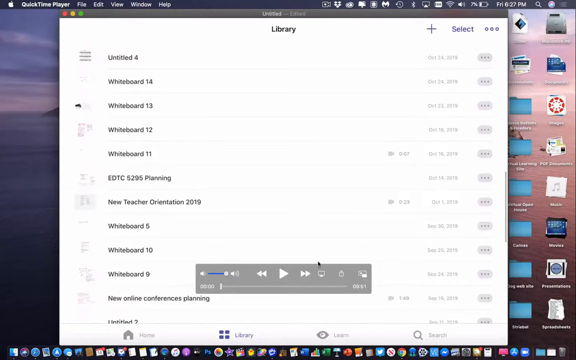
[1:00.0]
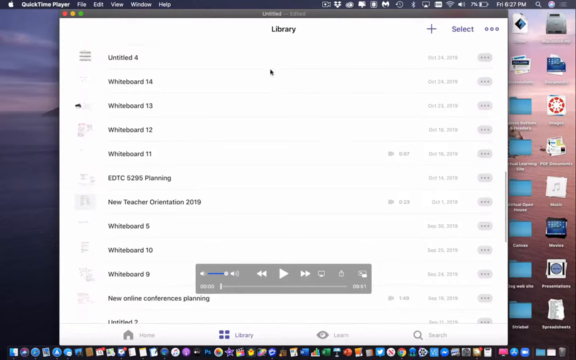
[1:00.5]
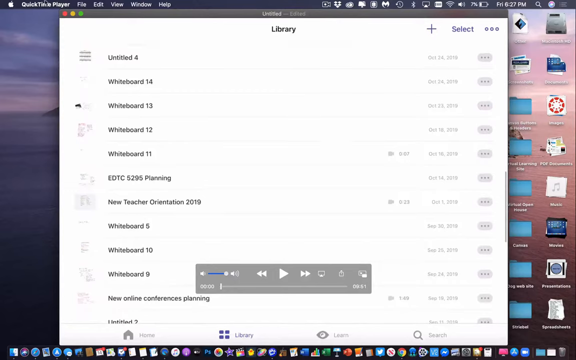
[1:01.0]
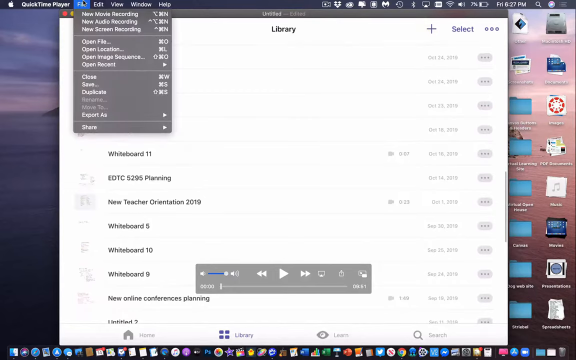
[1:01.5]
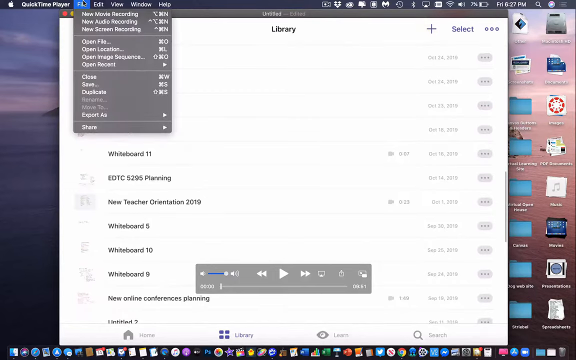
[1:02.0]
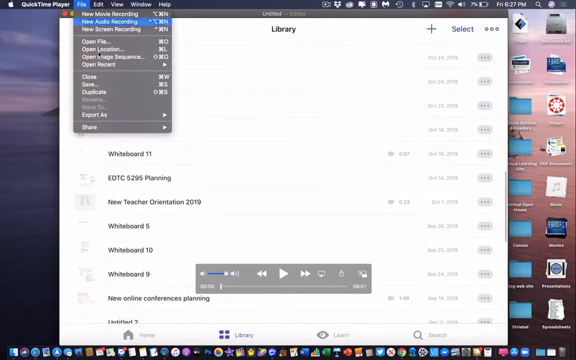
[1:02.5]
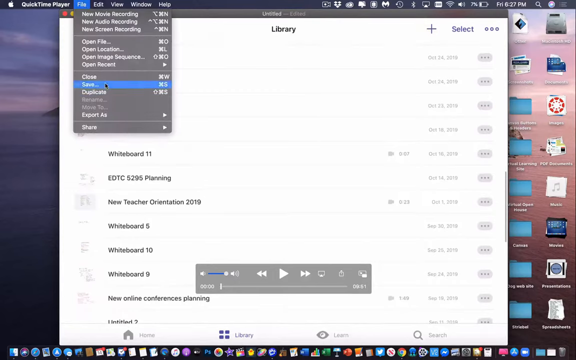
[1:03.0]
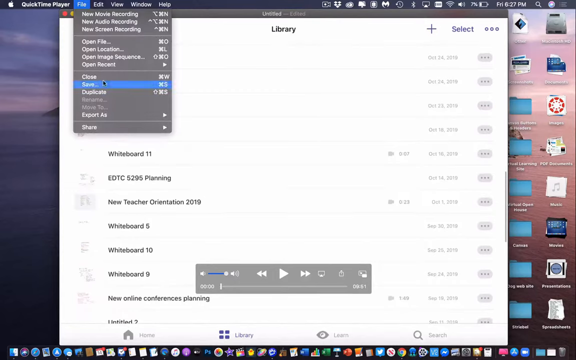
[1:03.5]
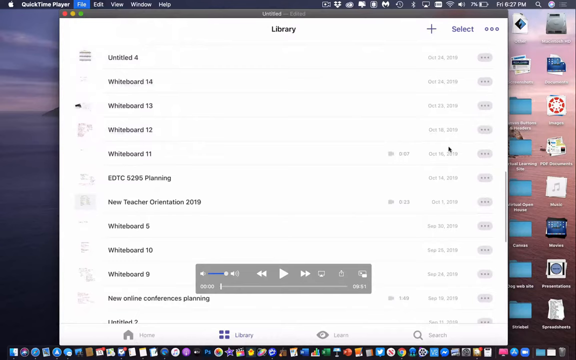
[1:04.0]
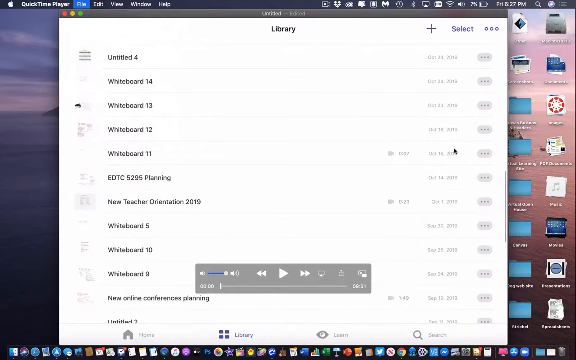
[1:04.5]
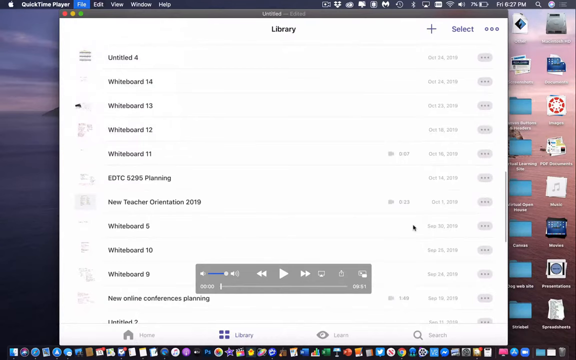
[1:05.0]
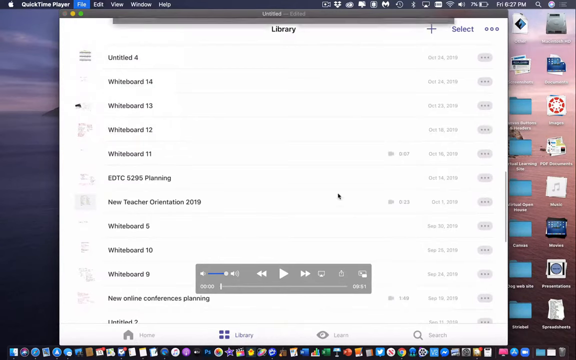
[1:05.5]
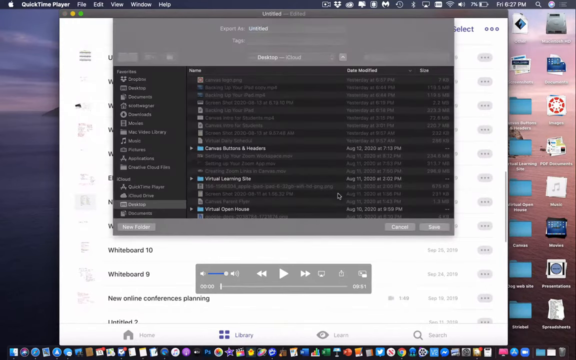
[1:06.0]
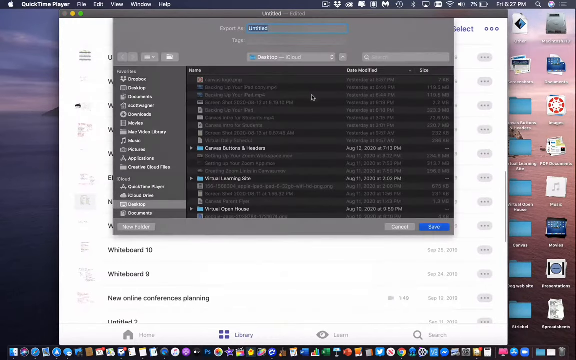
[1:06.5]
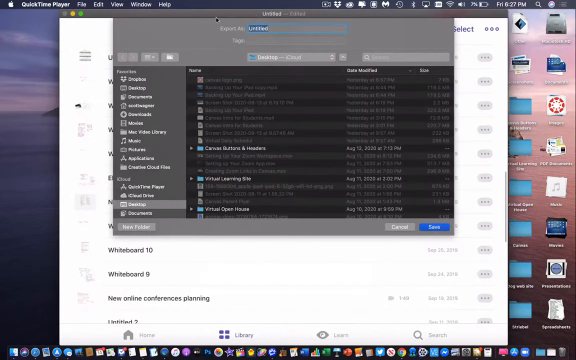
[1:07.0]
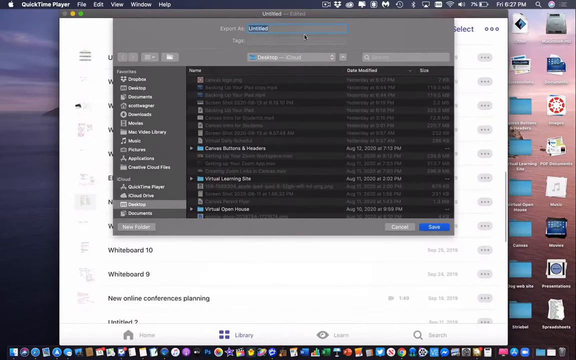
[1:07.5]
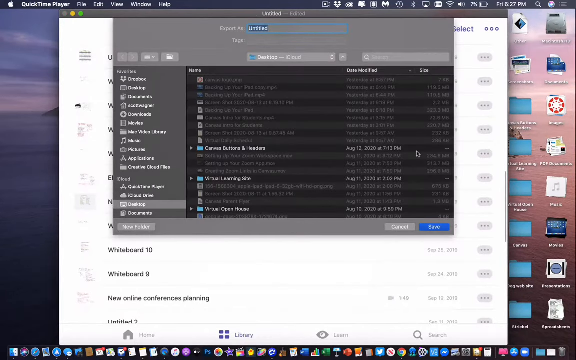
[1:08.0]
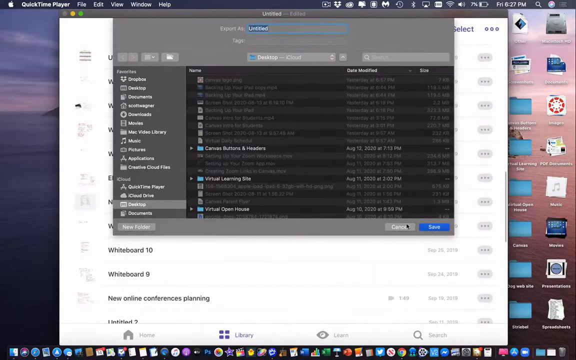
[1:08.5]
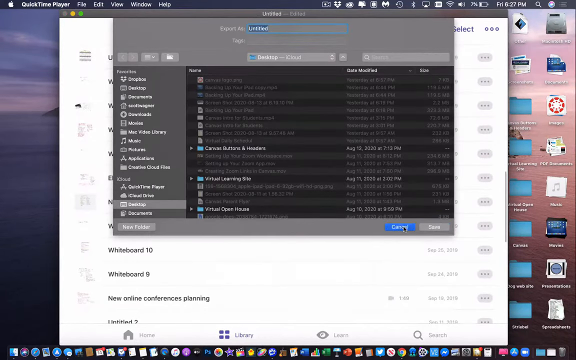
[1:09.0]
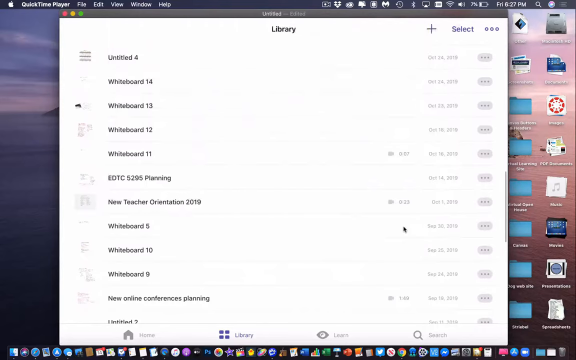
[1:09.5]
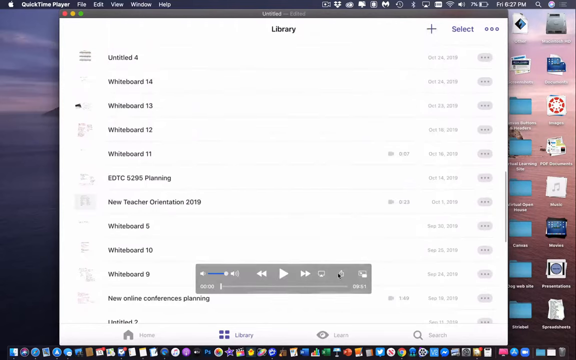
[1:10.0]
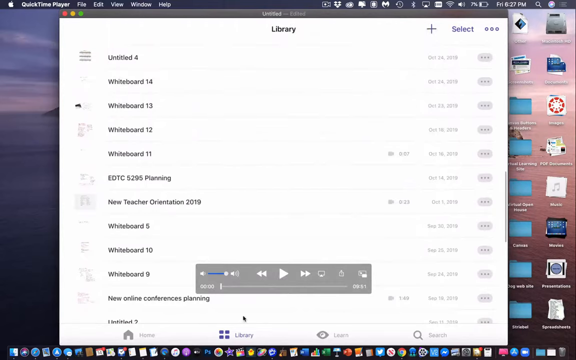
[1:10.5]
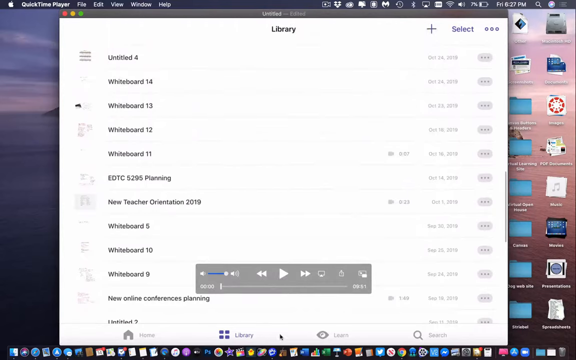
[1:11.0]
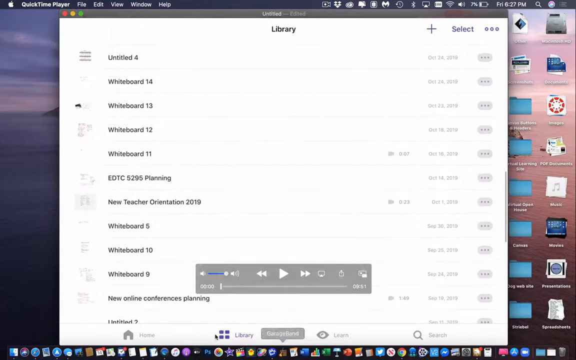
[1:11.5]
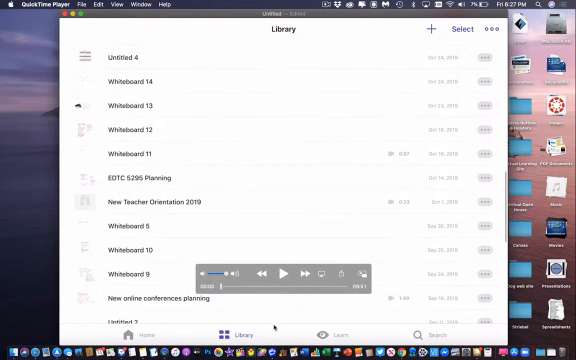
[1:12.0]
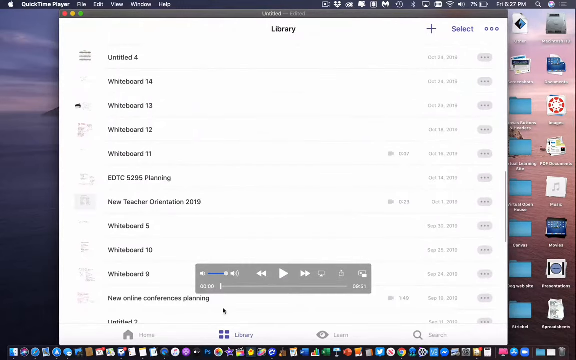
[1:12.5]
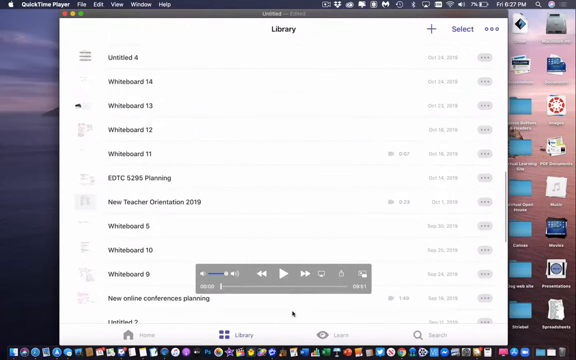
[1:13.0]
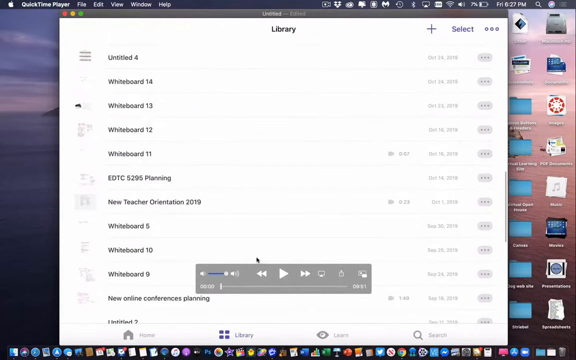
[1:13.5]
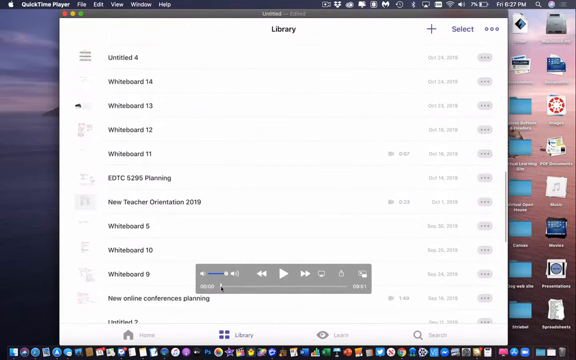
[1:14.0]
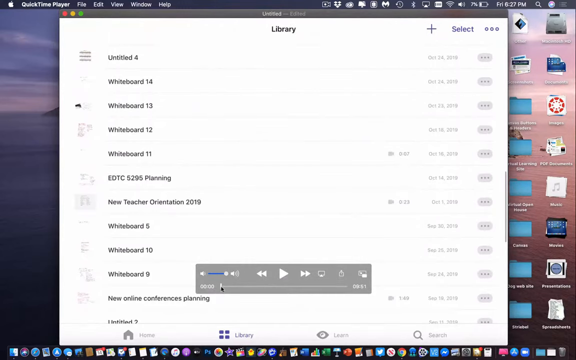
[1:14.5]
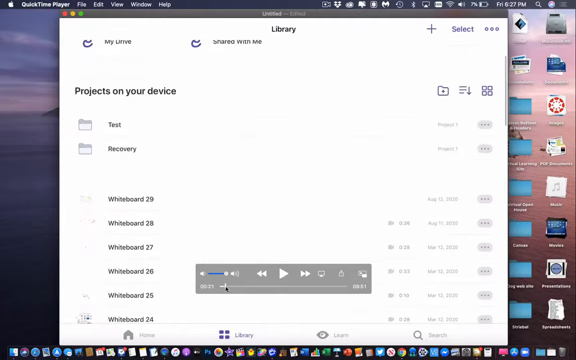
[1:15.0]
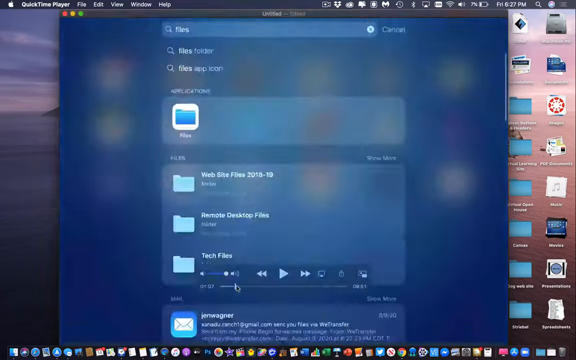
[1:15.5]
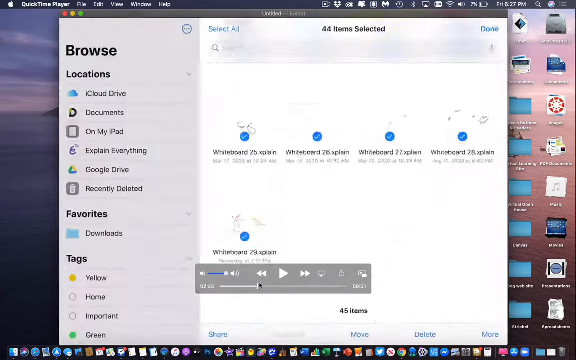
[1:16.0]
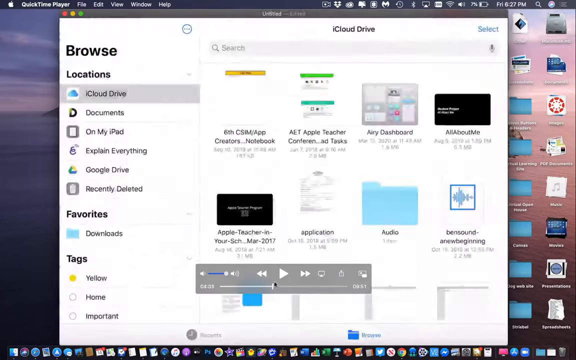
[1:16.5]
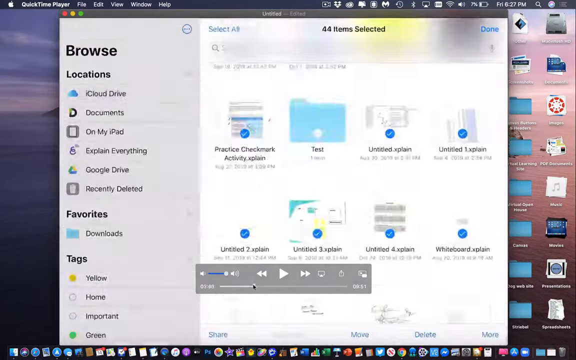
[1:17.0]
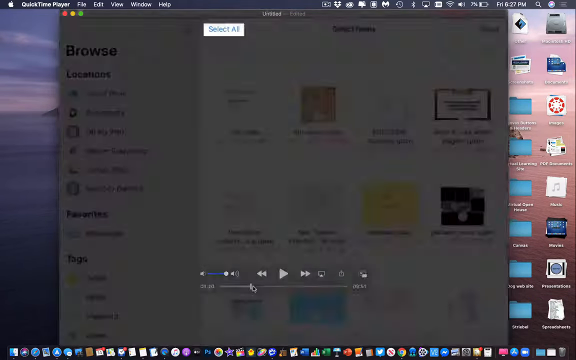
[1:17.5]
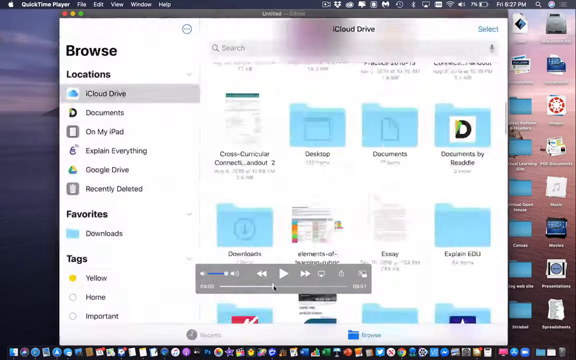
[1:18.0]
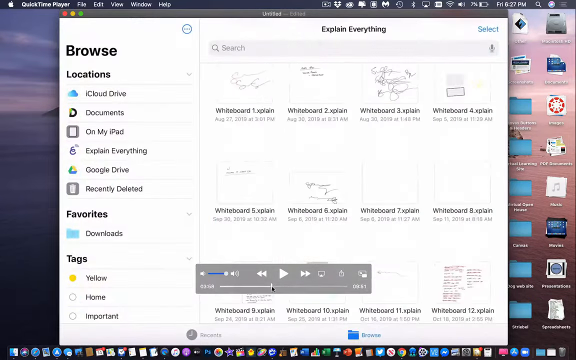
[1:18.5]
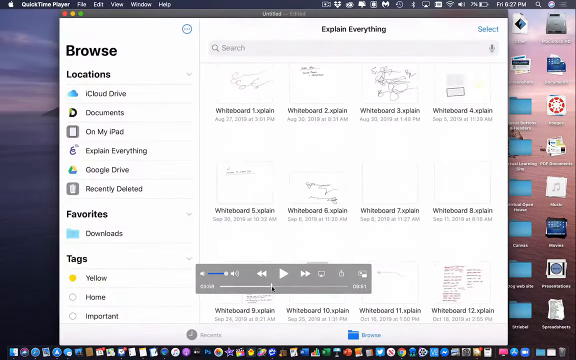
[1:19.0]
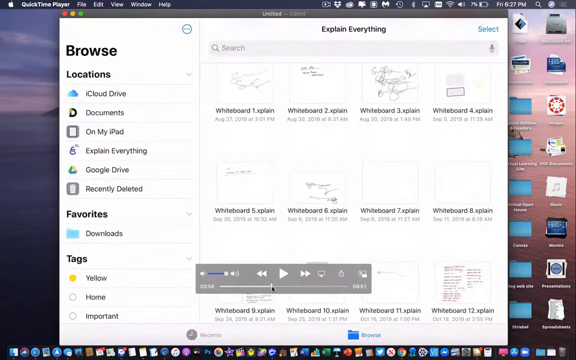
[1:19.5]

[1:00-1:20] A white screen shows a window open on the iPad, with a media player menu at the bottom center containing a play button, a rewind button and a fast forward button. Some folders are on the right side in the background and some menu items are at the top. The open window is called "library" and lists a bunch of different files, with titles such as "whiteboard 14" and "whiteboard 13" going down the list. The mouse cursor goes up to File, scrolls down to Save and clicks it, and a save menu opens with an "export as" option. The cursor moves up to the export as area, where it says "untitled," moves around, then goes down to a button that says "cancel" and clicks it, and the menu goes away. At the bottom of the screen, next to library, the person clicks on an item whose name begins with "garage." They move the cursor back and forth underneath the play bar, then scroll the video to the right, back to the left, and a little more to the right.